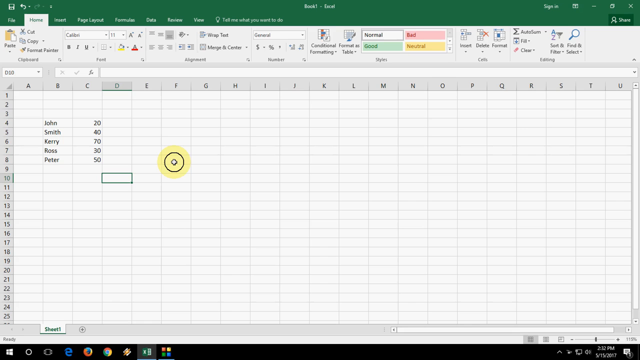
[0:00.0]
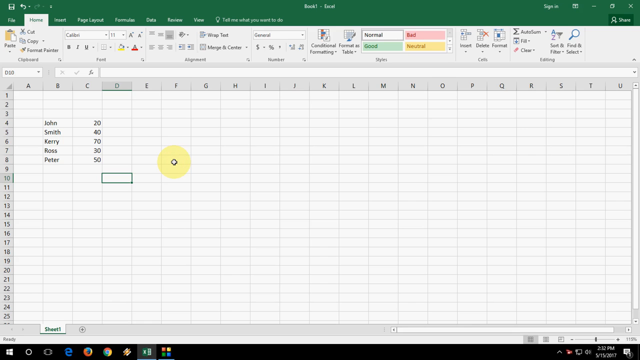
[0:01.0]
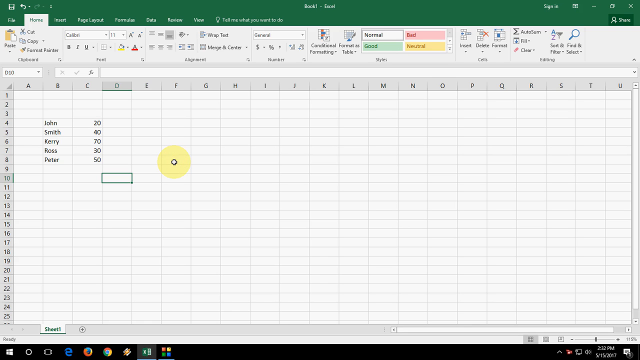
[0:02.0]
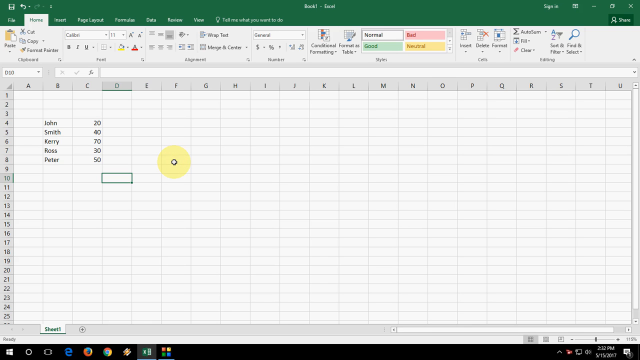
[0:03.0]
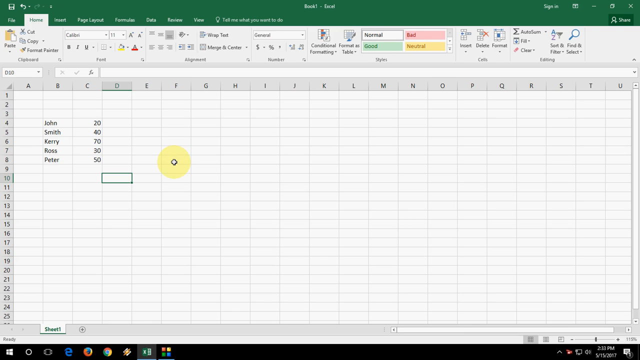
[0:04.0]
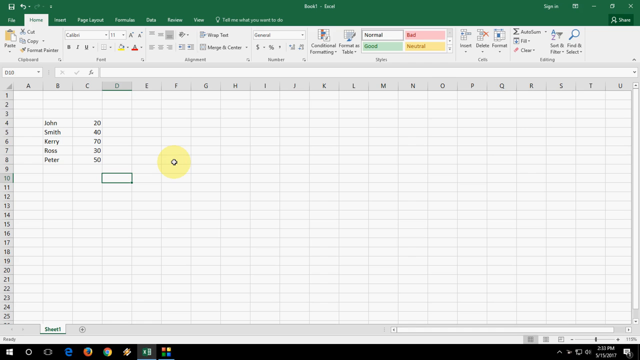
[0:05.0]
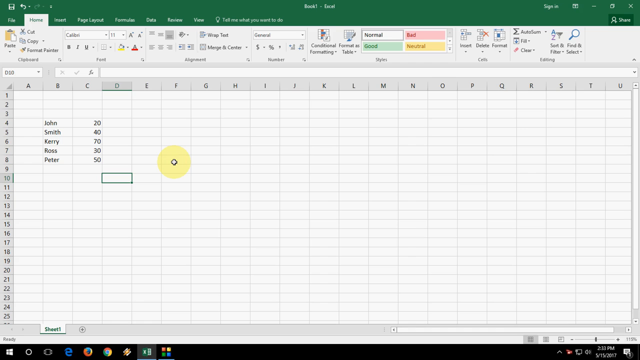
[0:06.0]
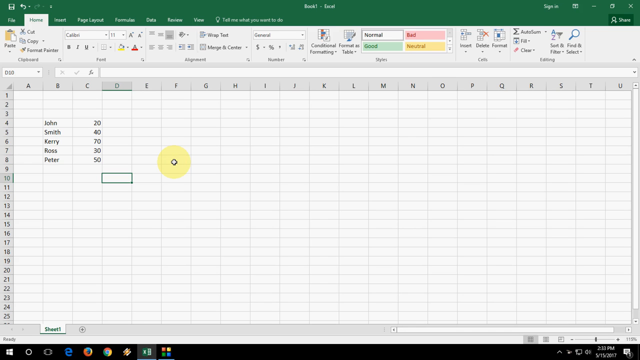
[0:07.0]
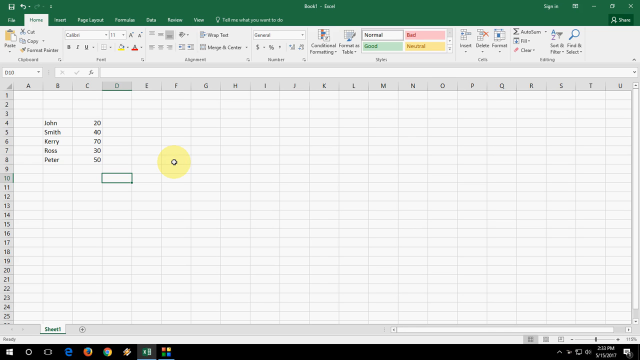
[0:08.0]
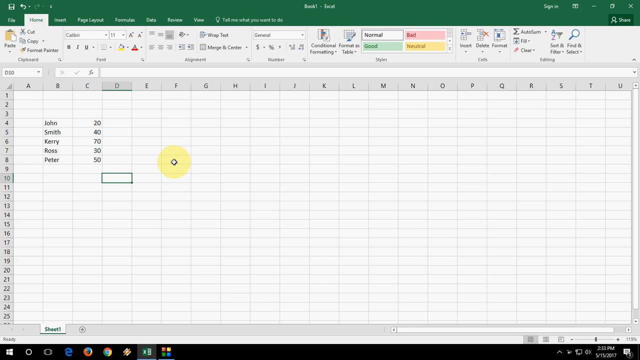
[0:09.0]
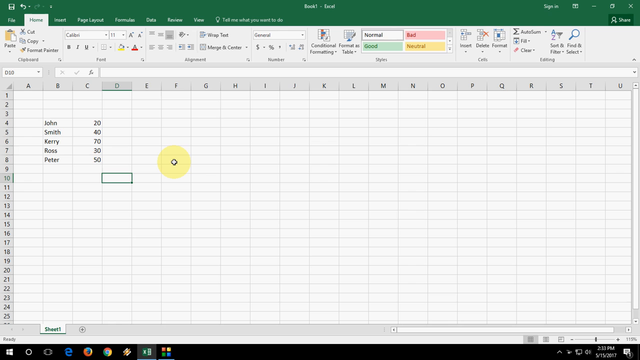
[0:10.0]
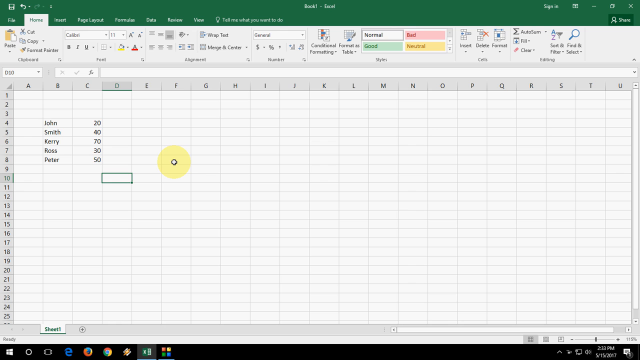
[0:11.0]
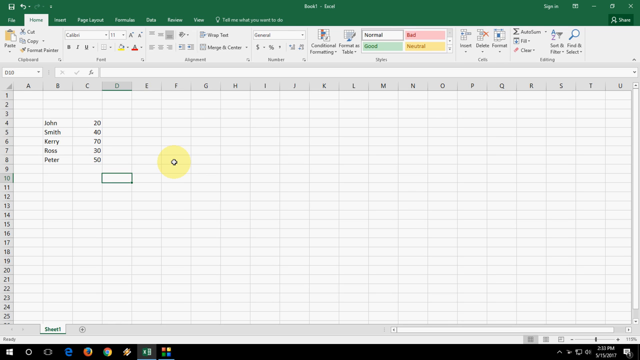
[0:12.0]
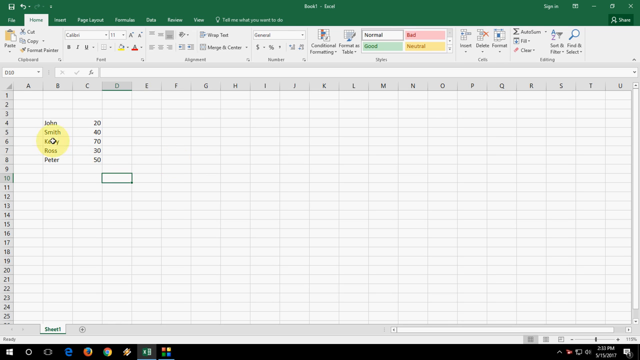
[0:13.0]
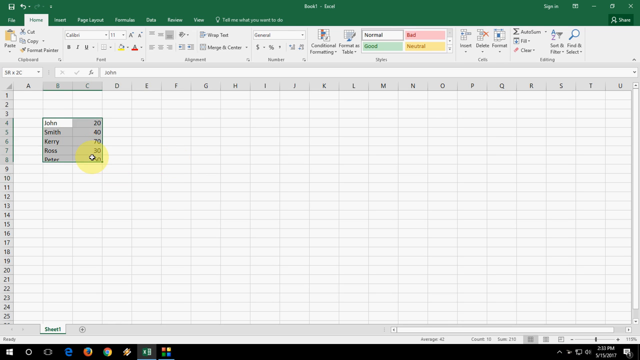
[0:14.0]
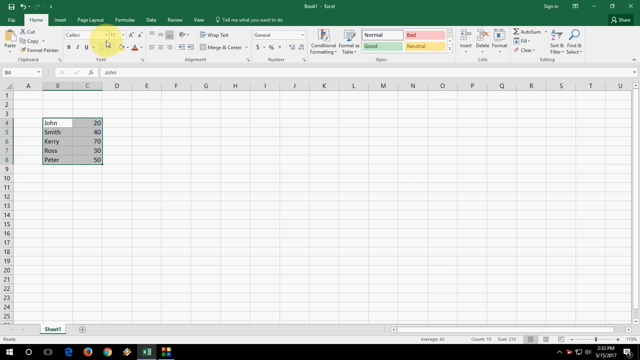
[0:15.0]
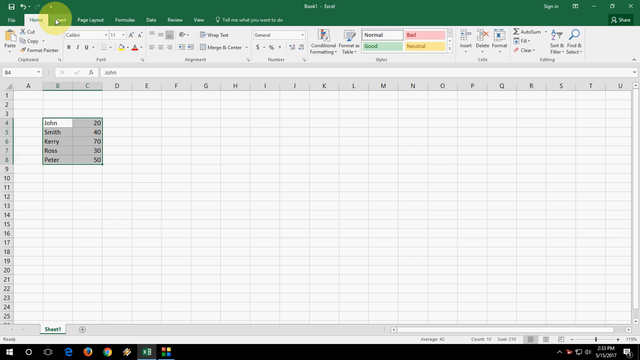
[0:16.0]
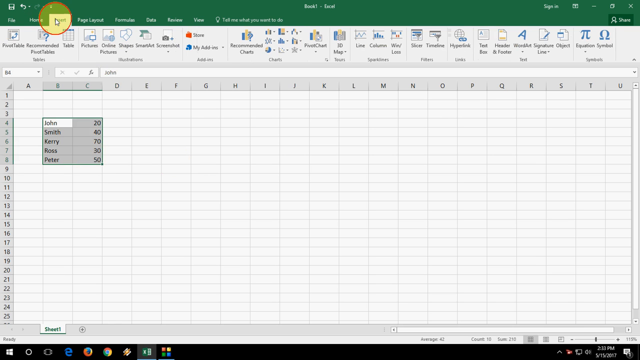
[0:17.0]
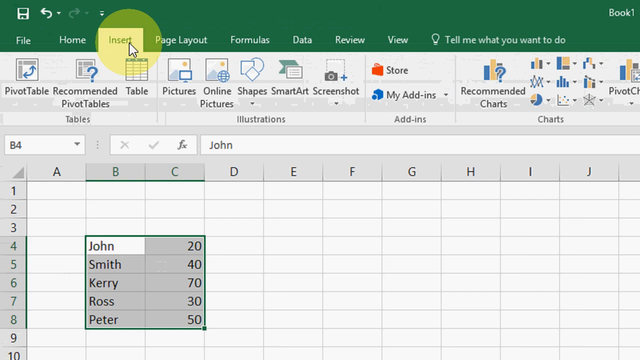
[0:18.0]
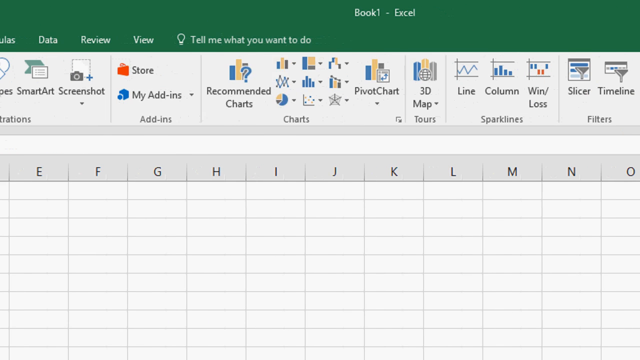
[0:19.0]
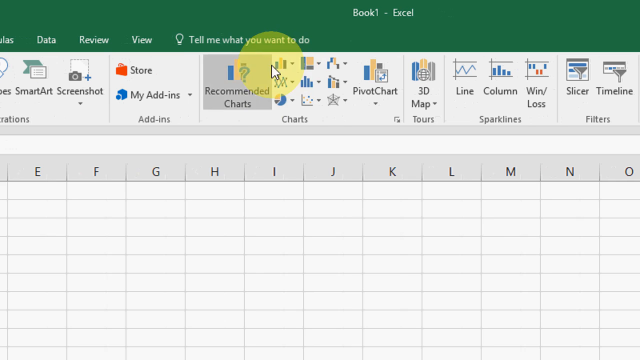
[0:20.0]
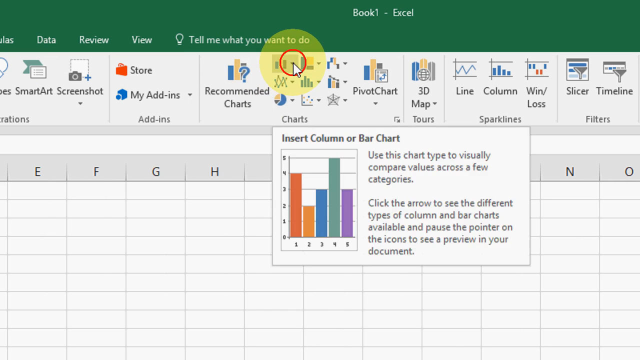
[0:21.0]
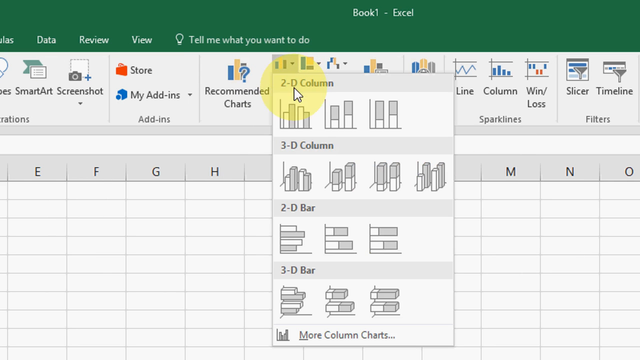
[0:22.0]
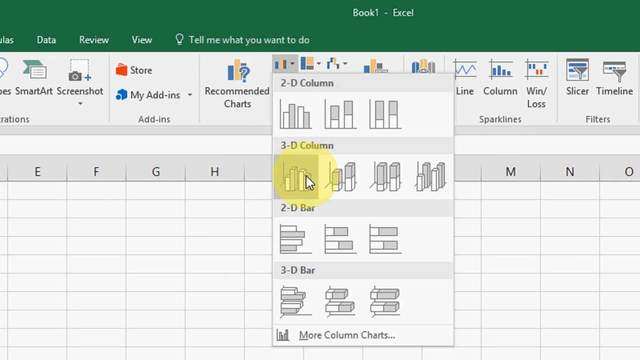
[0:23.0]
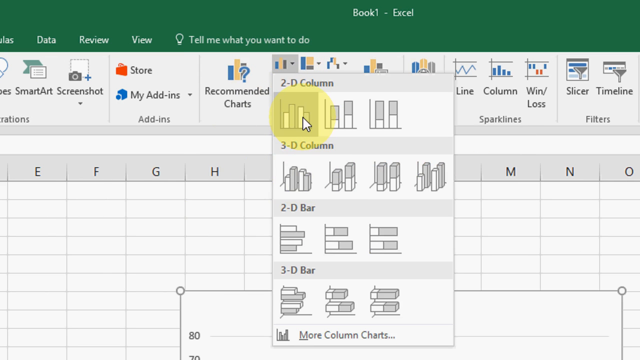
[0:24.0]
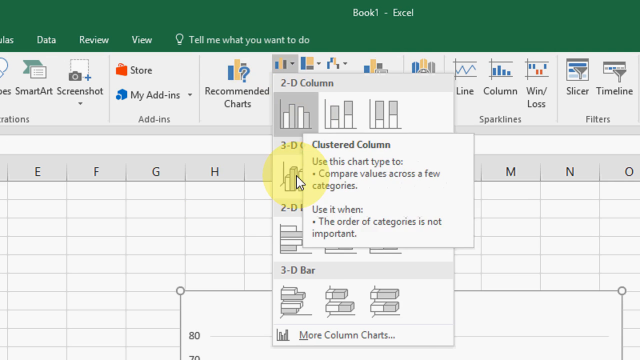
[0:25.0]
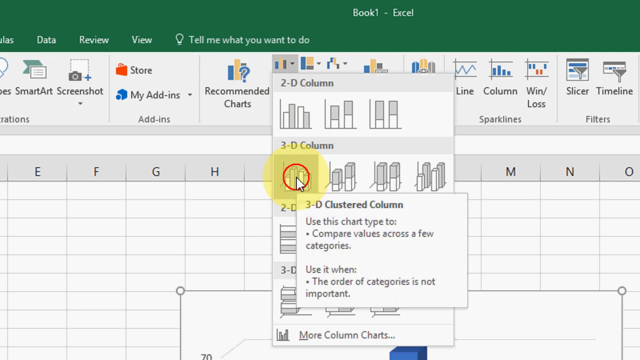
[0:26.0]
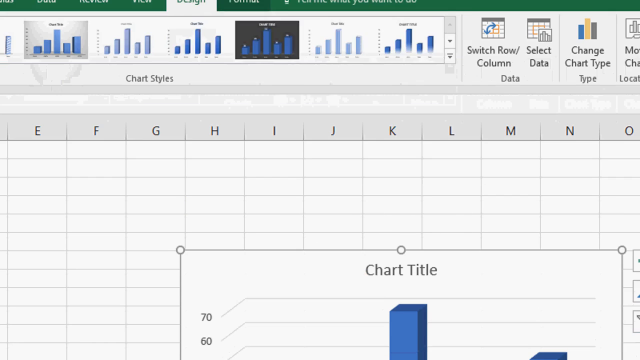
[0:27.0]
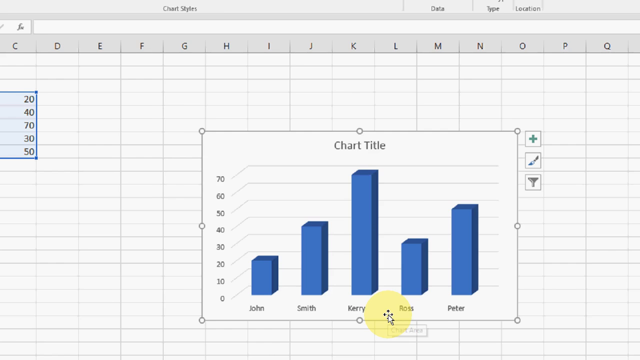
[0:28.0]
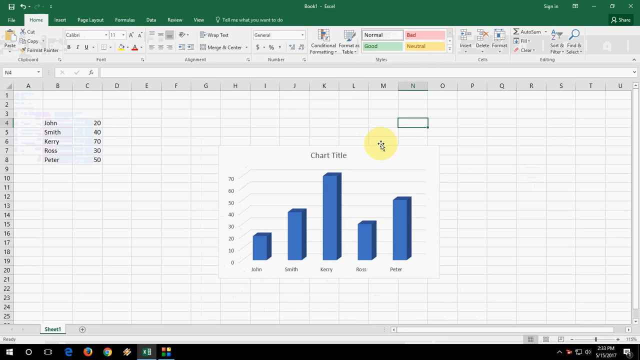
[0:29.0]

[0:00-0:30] A PC computer monitor shows a spreadsheet open in Windows Excel. The rows run from 1 to 25 and the columns from A to U. There are five entries in column B, starting at row 4: John, with the number 20 to the right; Smith below that, with 40 to the right; Carey below that, with 70 to the right; Ross below that, with 30 to the right; and finally Peter, with 50 to the right. Two boxes below, at row 10 in column D, a box is highlighted in green. To the right, at row 8 in column F, there is a yellow circle with what looks like a tiny white square inside it. The cursor moves the yellow circle to the box of names and highlights them, then goes to the toolbar and clicks on Columns, and a chart titled "chart title" appears in the middle of the spreadsheet.